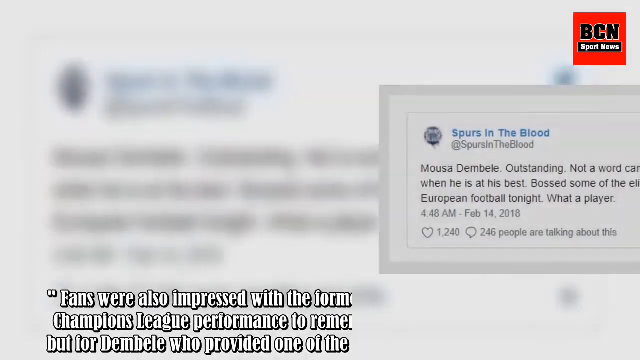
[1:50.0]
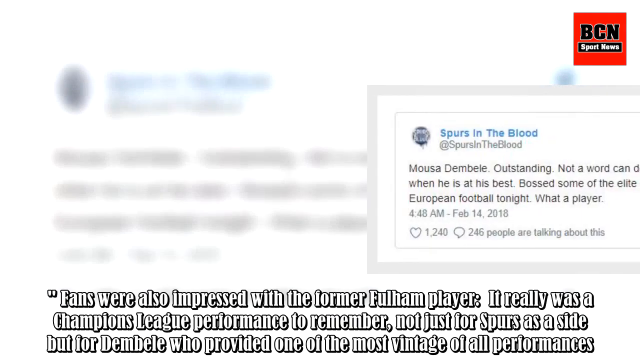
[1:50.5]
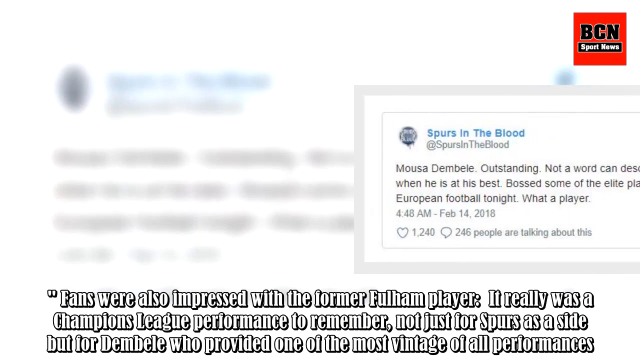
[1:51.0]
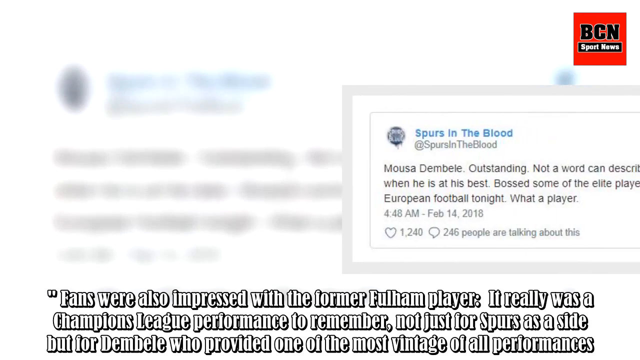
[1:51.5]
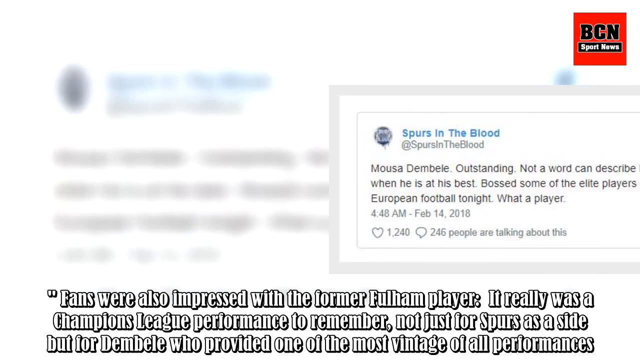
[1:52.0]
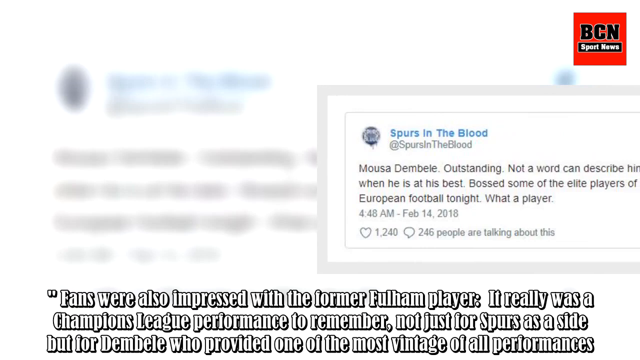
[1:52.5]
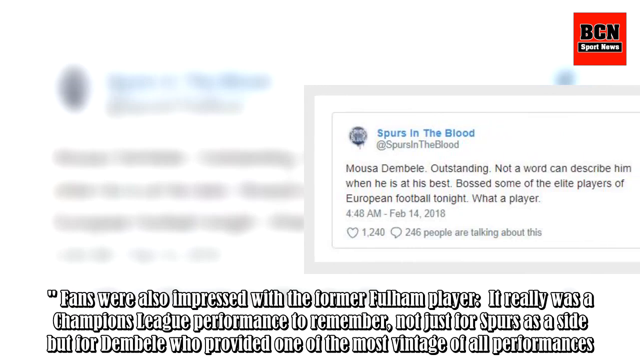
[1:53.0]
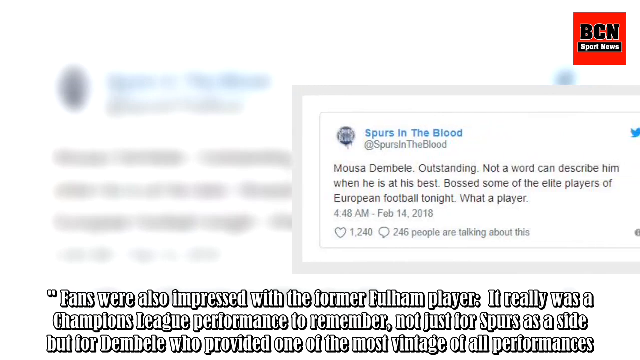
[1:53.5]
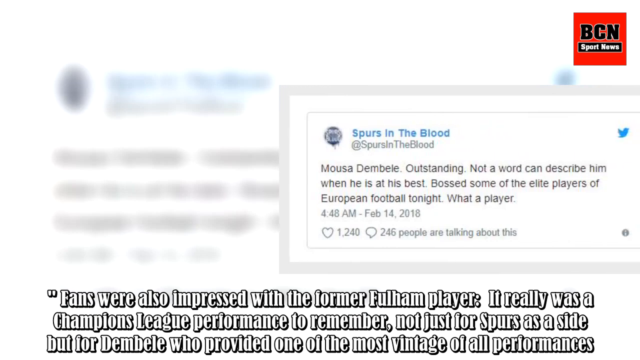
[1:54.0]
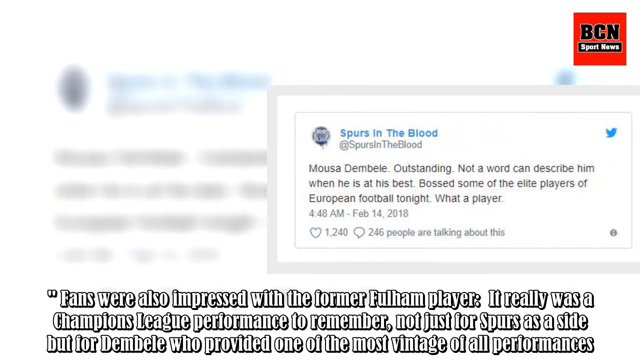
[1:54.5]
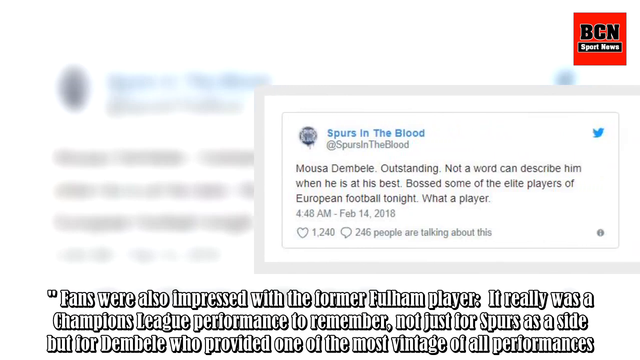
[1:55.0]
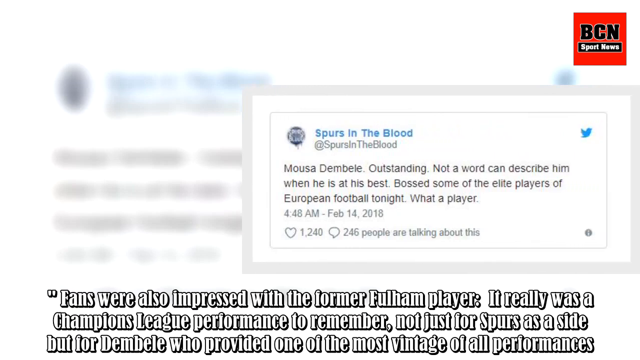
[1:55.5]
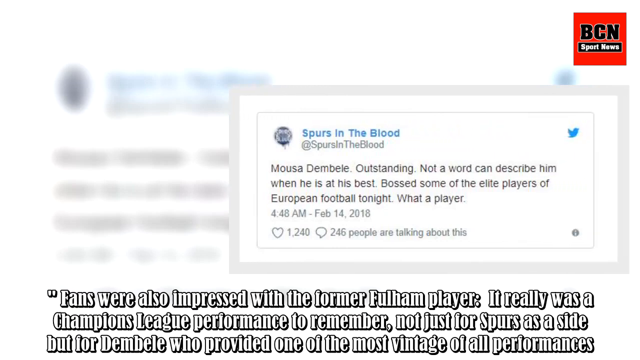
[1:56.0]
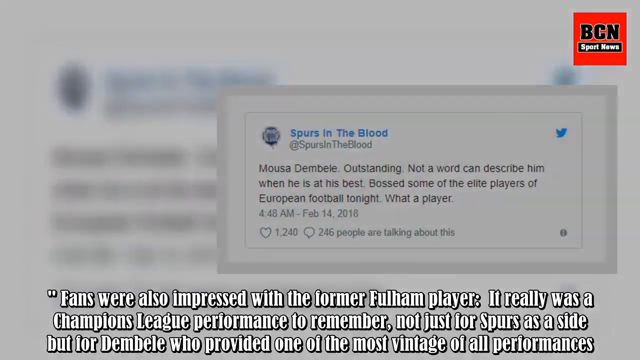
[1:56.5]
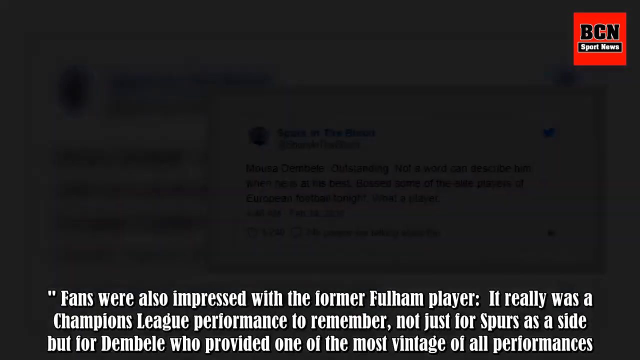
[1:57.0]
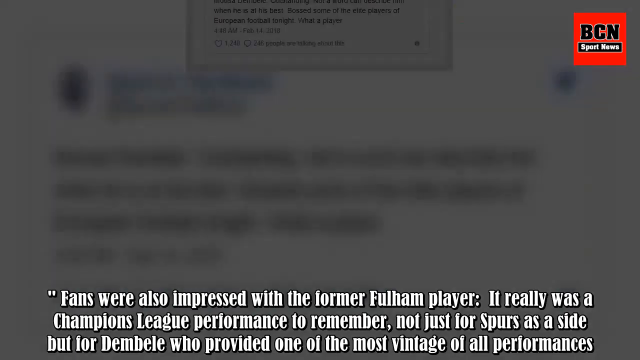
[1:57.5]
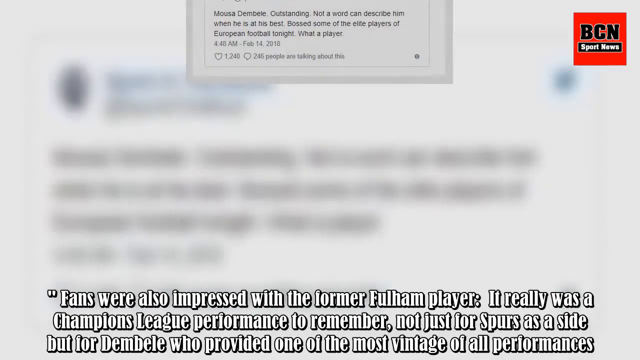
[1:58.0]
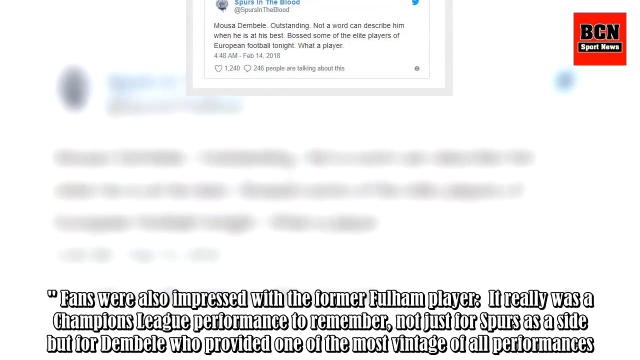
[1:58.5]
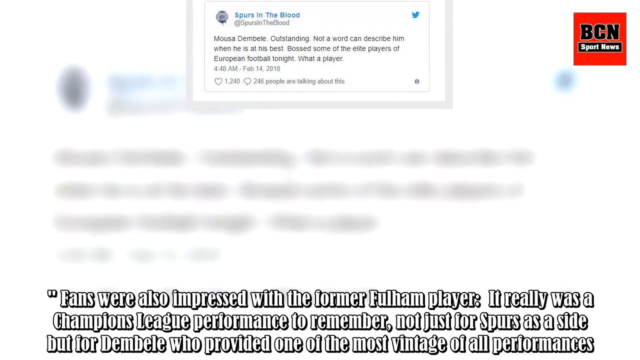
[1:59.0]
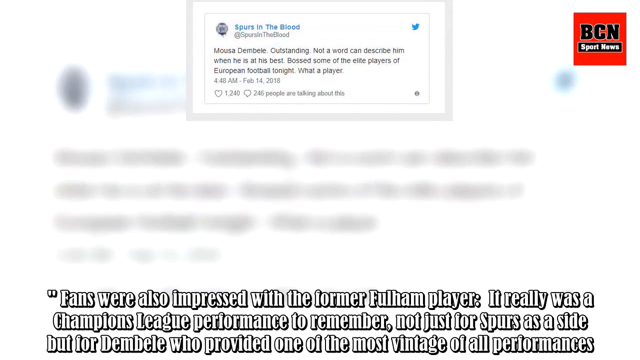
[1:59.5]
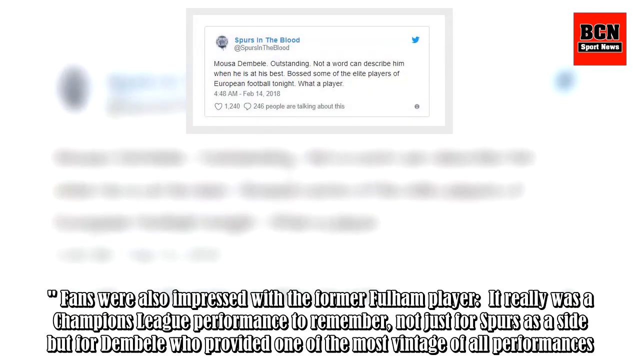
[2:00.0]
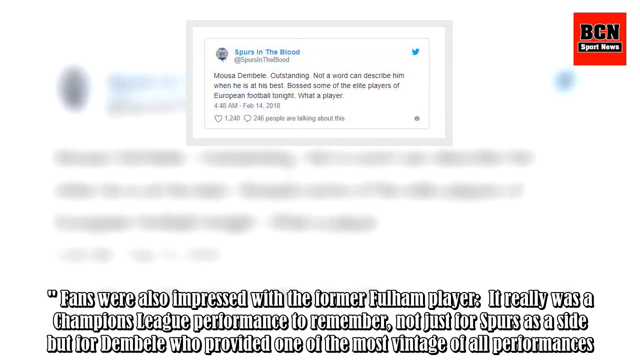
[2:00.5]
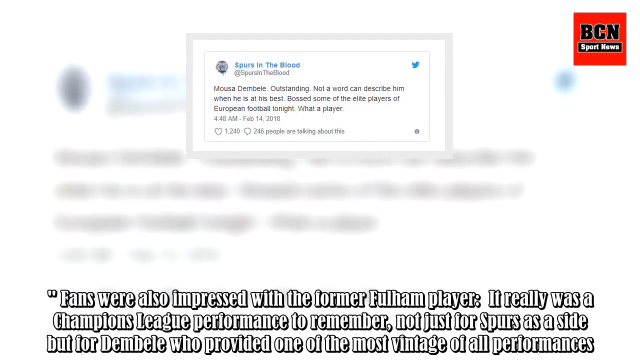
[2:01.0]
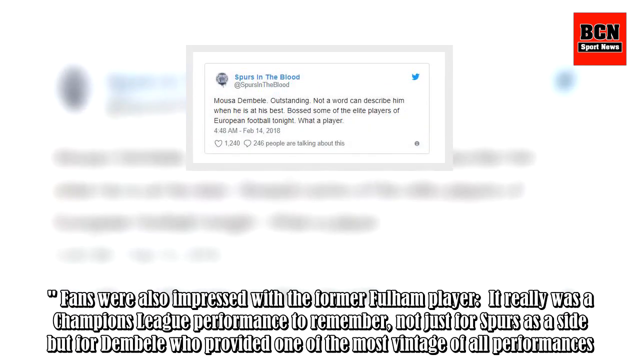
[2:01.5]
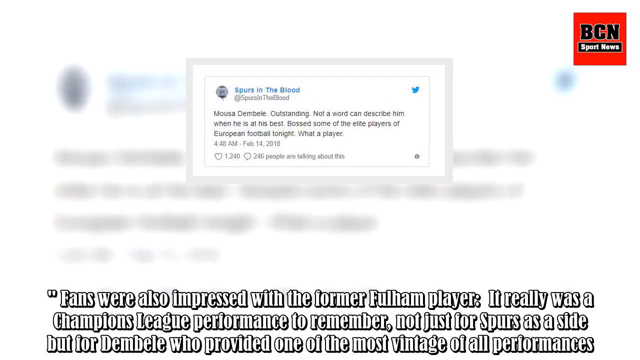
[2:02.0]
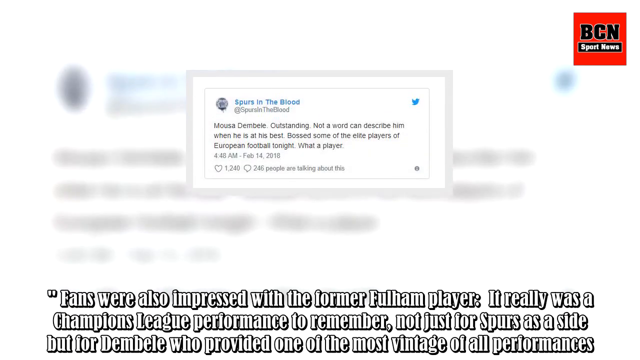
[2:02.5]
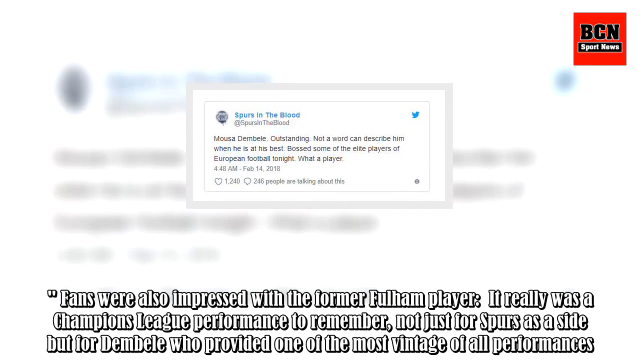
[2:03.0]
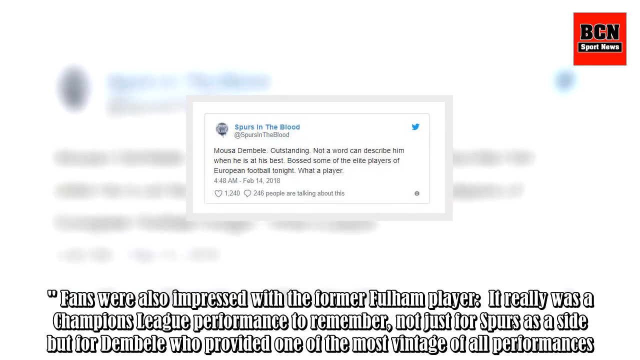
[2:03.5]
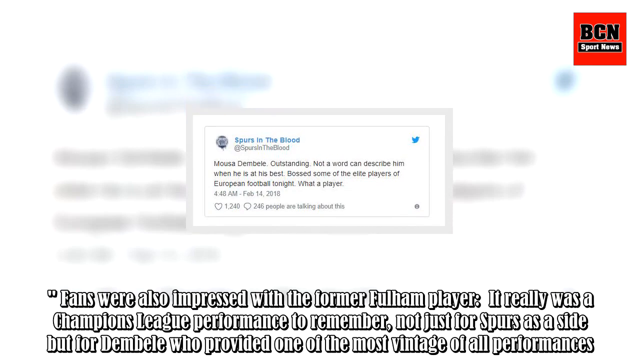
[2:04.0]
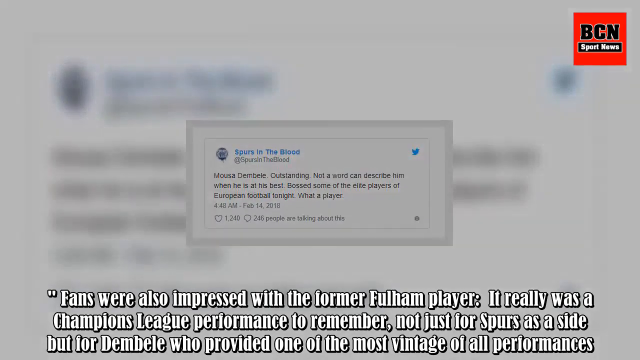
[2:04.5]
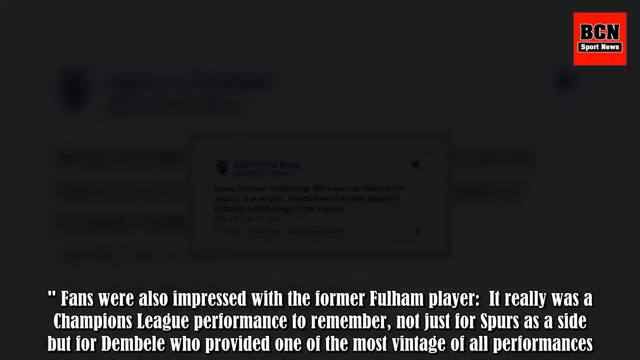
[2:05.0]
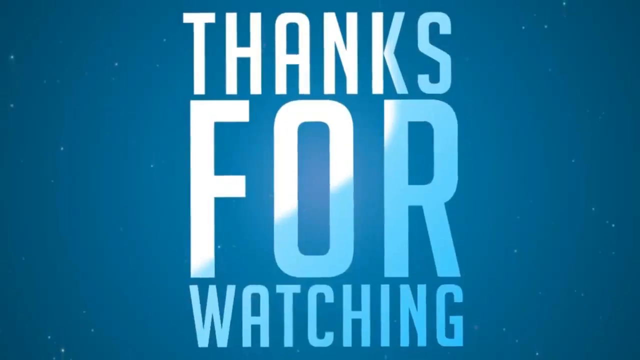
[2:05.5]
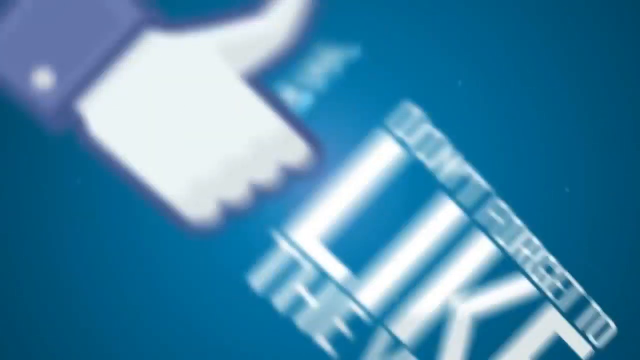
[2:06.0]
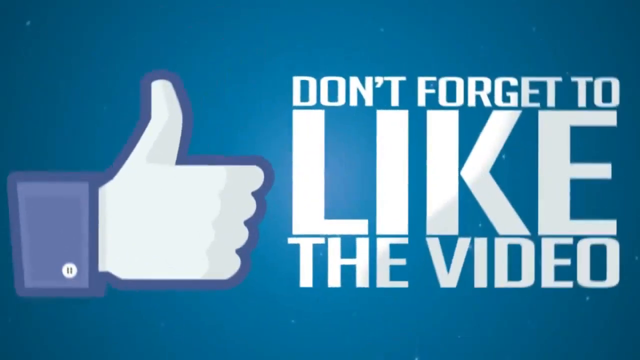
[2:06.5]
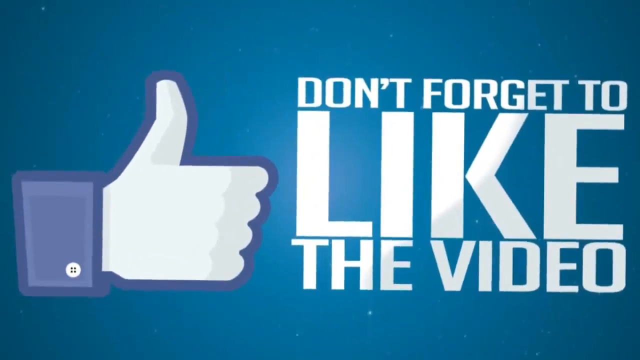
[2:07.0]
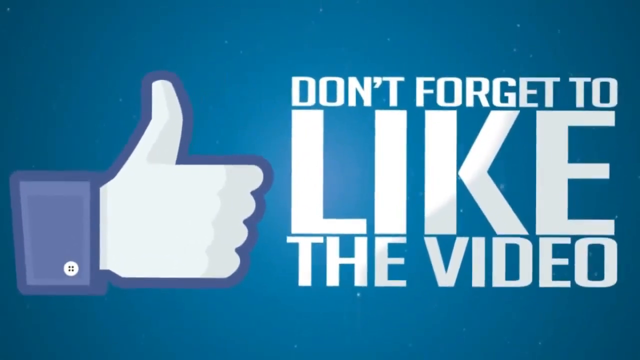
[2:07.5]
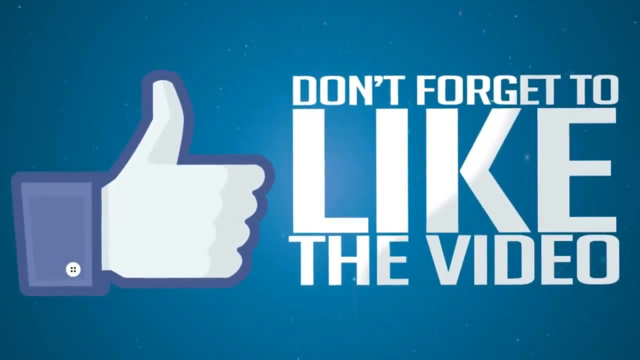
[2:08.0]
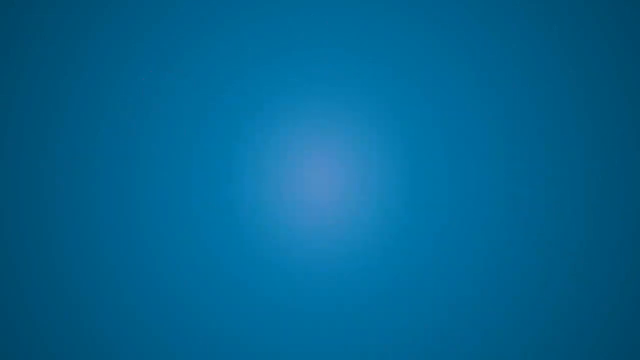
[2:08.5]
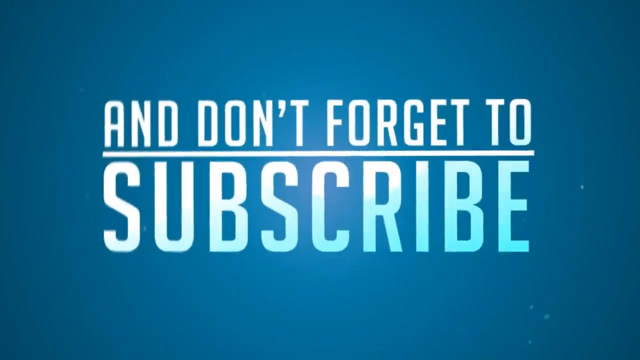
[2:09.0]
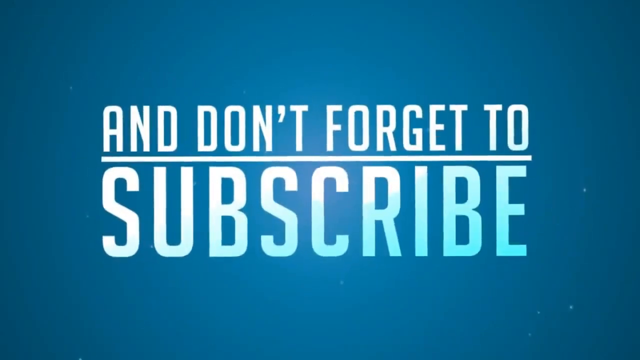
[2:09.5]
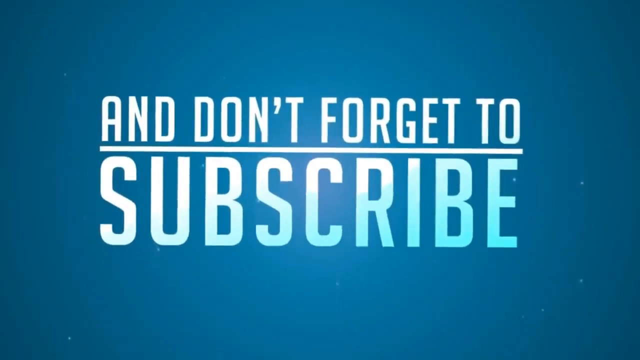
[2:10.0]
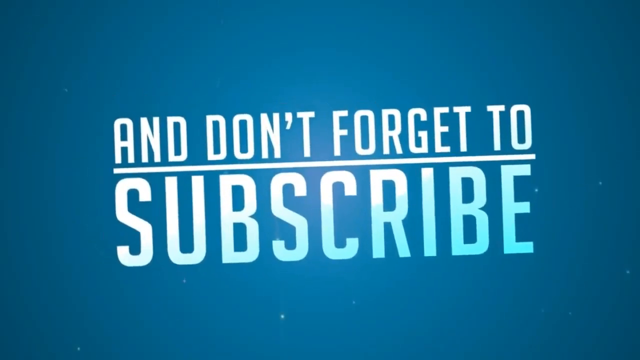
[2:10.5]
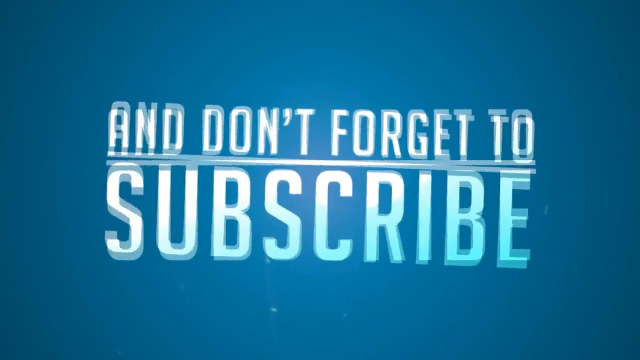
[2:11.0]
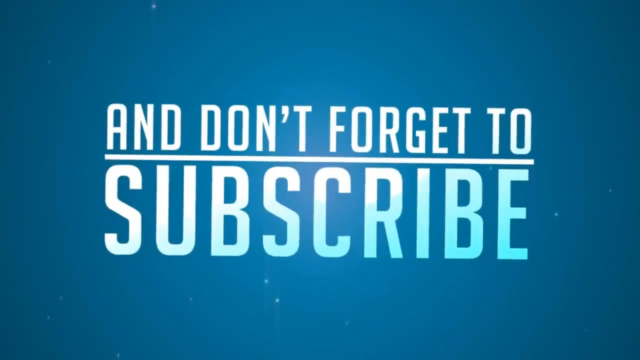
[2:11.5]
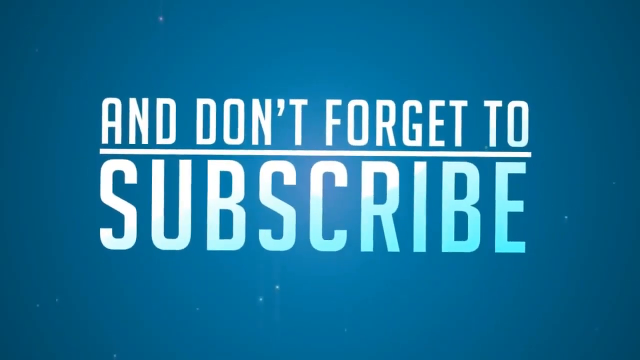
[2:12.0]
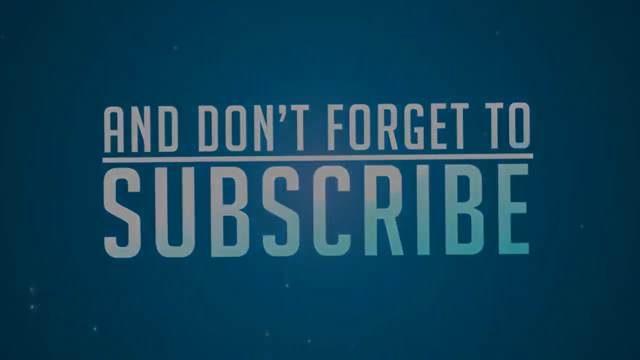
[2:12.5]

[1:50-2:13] A new post, apparently on Twitter, moves across the screen: Spurs in the blood says "Moussa Dembele outstanding, not a word can describe him when he is at his best. Bossed some of the elite players of European football tonight, what a player." It has 1,240 hearts and 246 people talking about it. Text below reads "fans were also impressed with the former Fulham player. It really was a Champions League performance to remember, not just for Spurs as a side, but for Dembele who provided one of the most vintage of all performances." The words at the bottom stay in place while the Twitter card on top slowly moves across the screen and then moves down. The video ends with "thanks for watching don't forget to like the video and don't forget to subscribe."